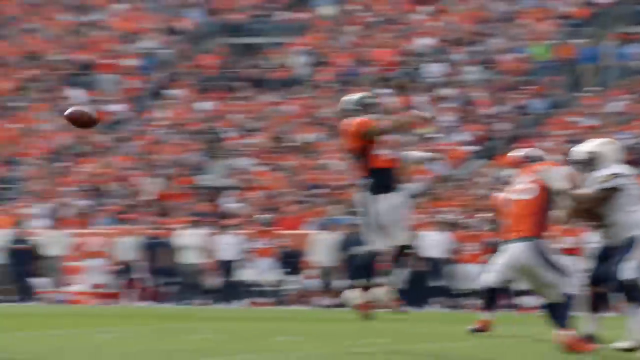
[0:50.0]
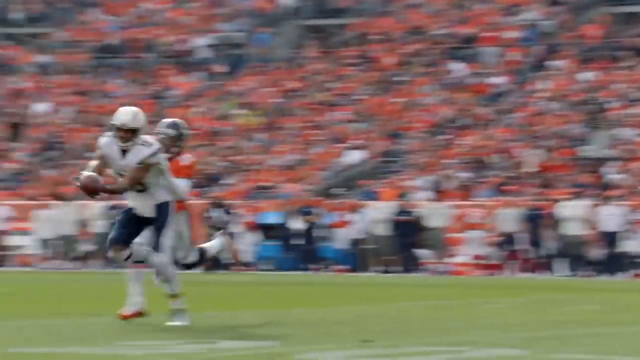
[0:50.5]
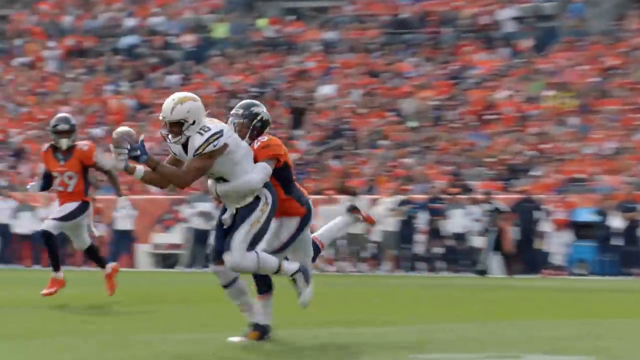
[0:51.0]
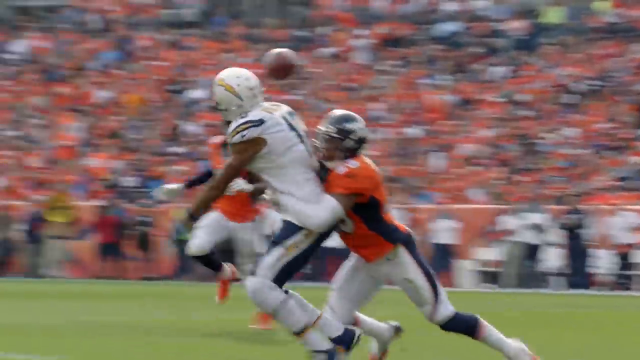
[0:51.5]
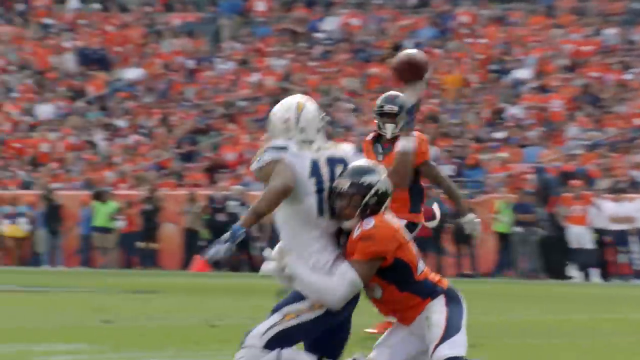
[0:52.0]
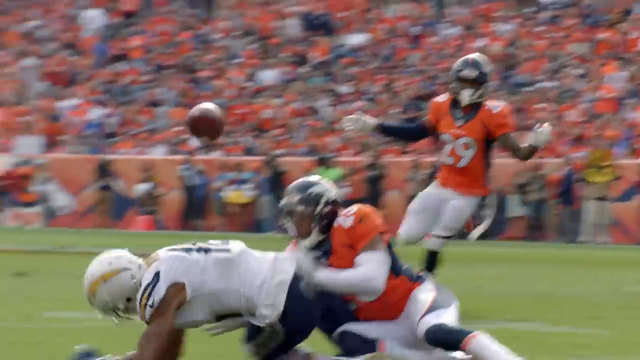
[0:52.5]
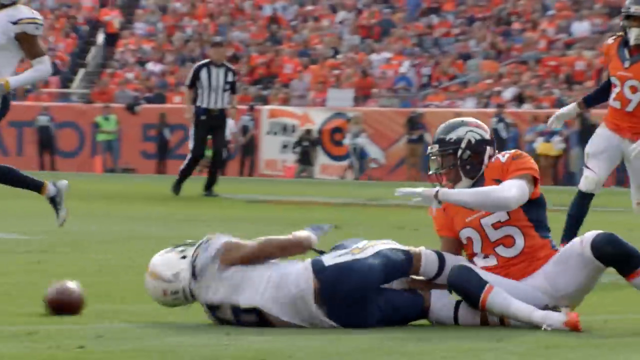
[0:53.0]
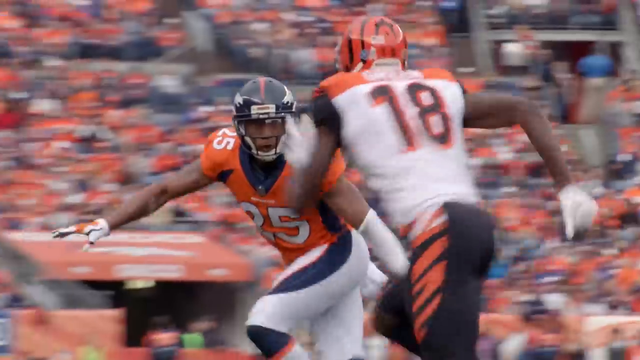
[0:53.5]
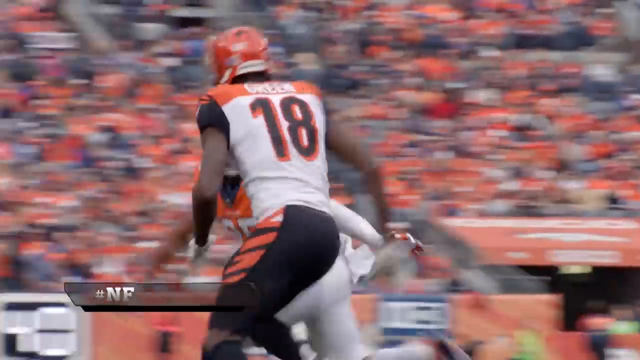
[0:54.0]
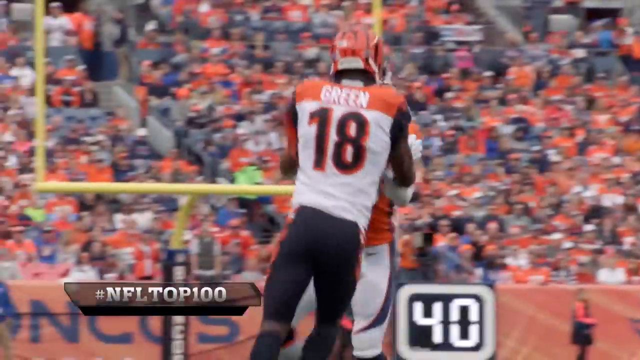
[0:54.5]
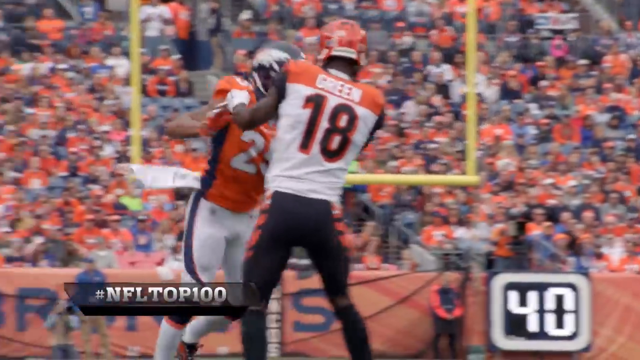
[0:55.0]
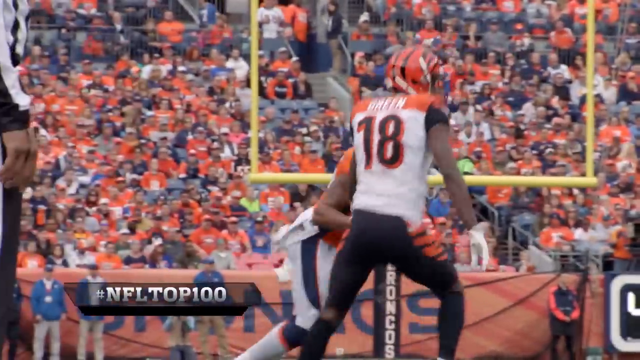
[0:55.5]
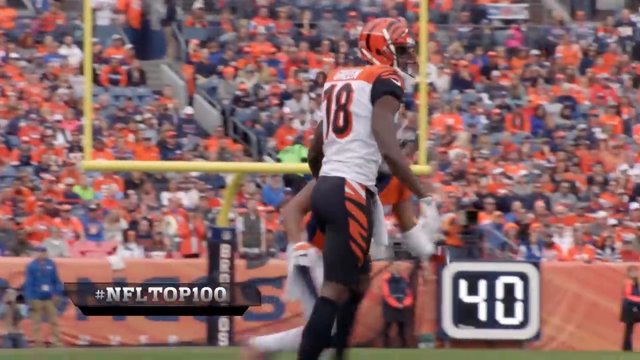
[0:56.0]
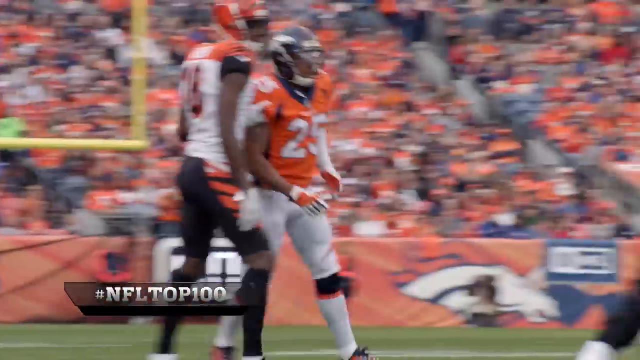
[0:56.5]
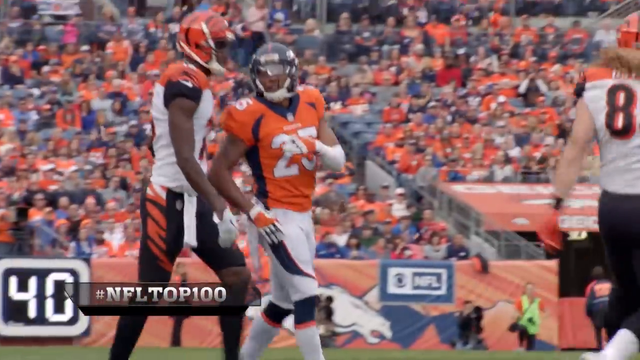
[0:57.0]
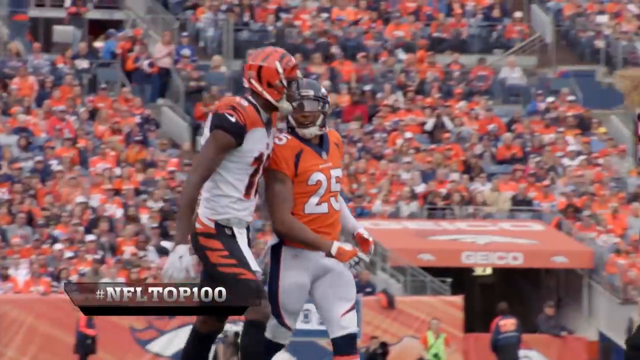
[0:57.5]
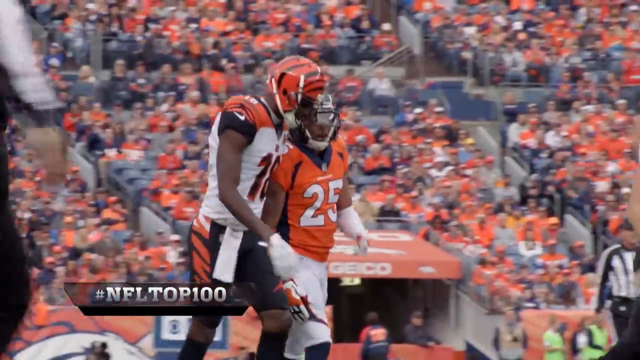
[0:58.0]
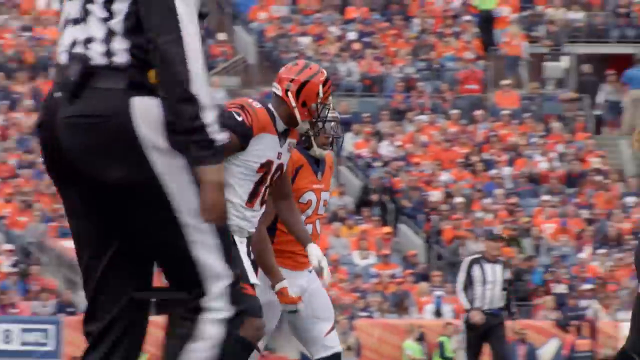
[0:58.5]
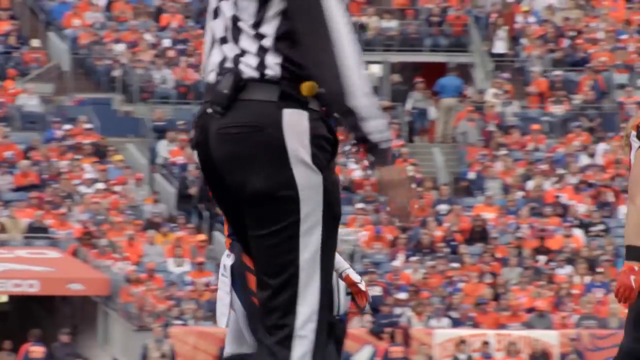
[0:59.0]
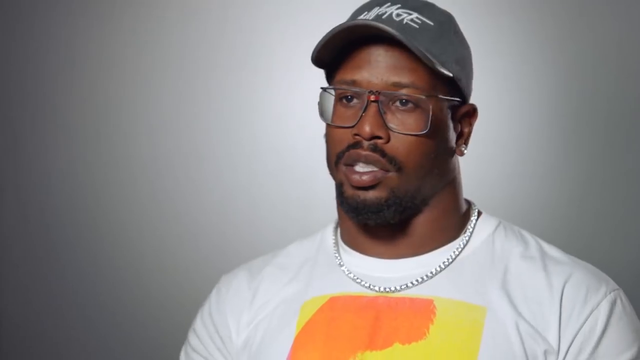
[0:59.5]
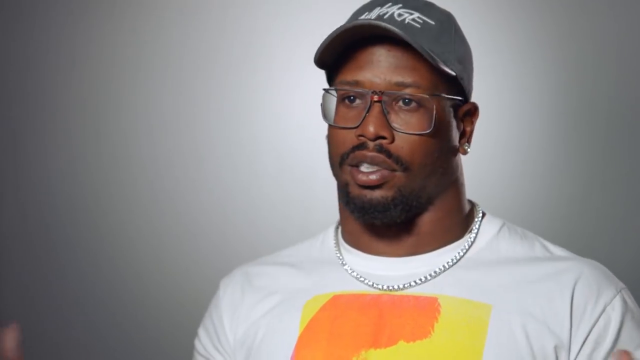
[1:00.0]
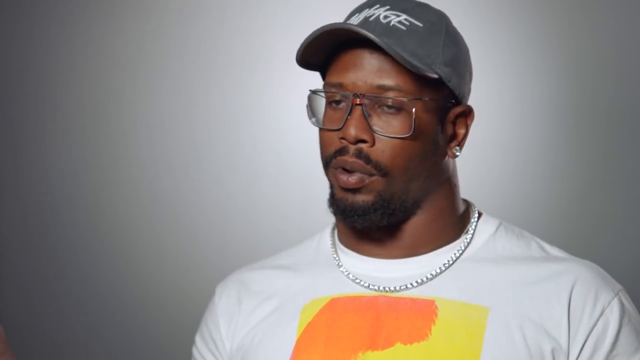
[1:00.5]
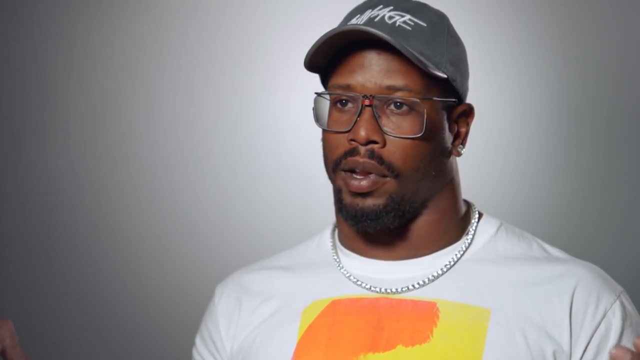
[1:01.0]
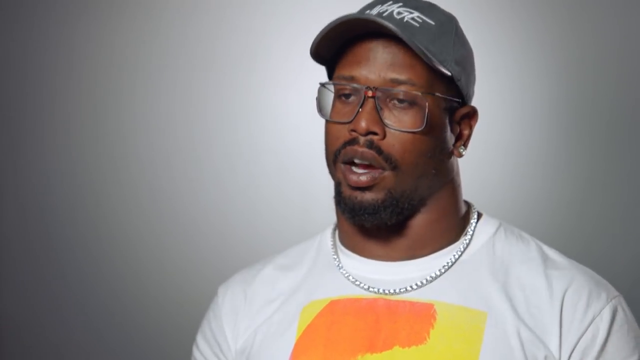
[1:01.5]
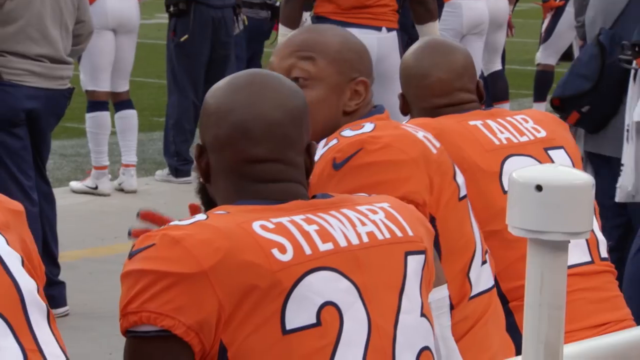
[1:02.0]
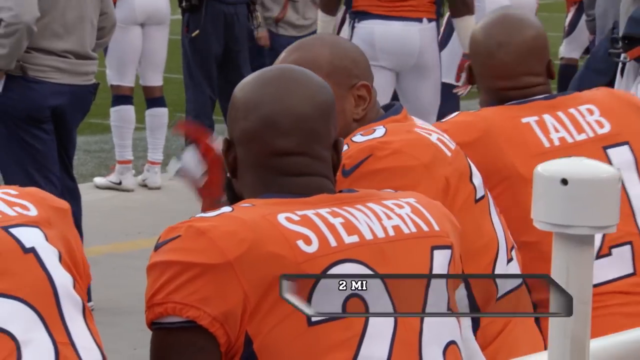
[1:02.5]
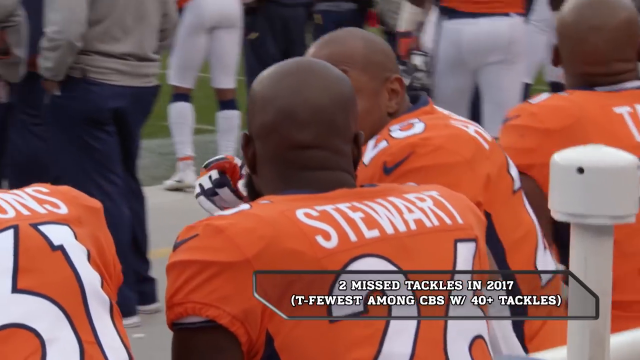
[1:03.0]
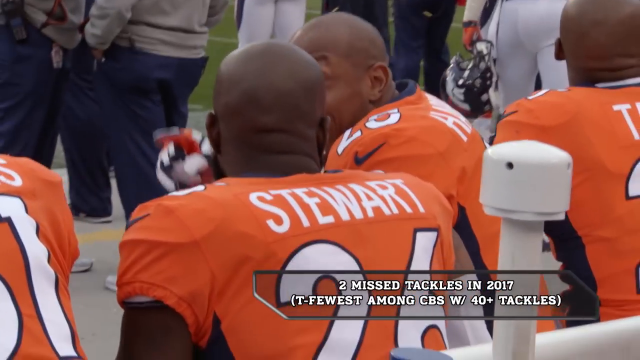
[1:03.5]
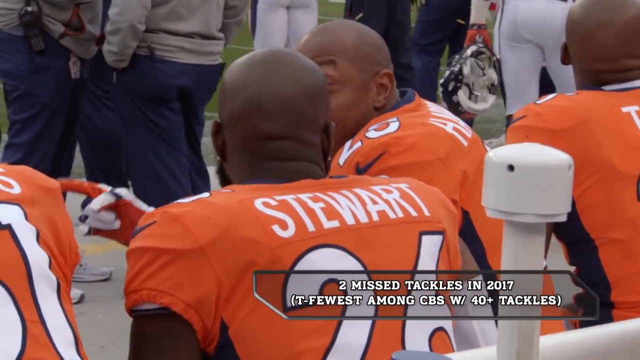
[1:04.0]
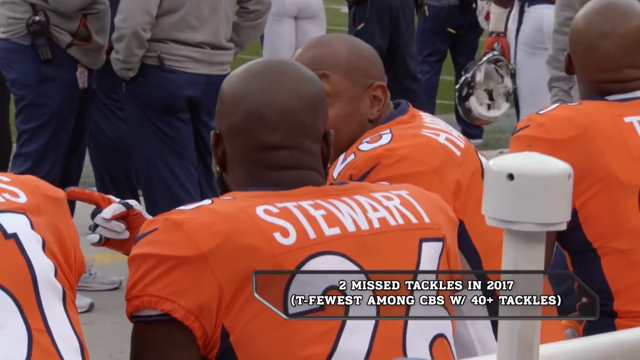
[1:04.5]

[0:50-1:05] In NFL game footage, a team, possibly the Chargers, throws a pass to a receiver, and the focus seems to be on Chris Harris Jr., wearing number 25, running against the receiver and preventing him from catching the ball. A graphic reading "#NFL top 100" comes up; the video appears to be a feature on Chris Harris Jr., apparently ranked in the top 100. It cuts back to Von Miller talking into the camera, then to Harris Jr. sitting on the bench talking to some of his players, one of whom has "Stewart" on the back of his jersey. On-screen text reads "2 missed tackles in 2017" with "(T- fewest among CBs with 40 plus tackles)" underneath.